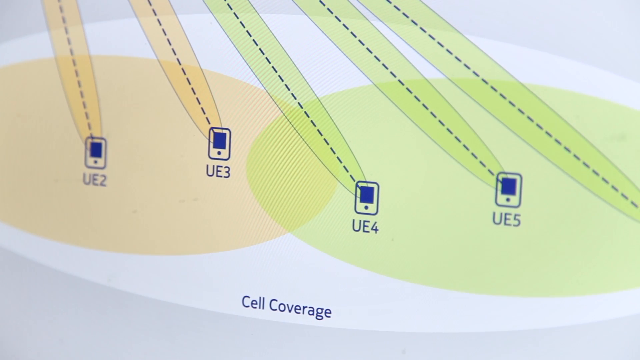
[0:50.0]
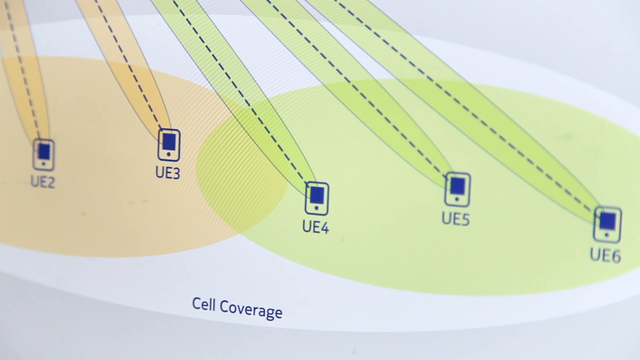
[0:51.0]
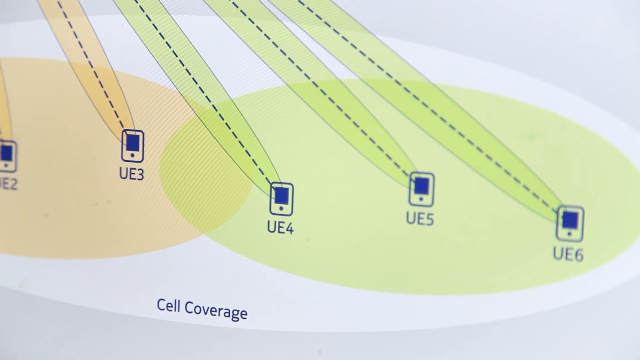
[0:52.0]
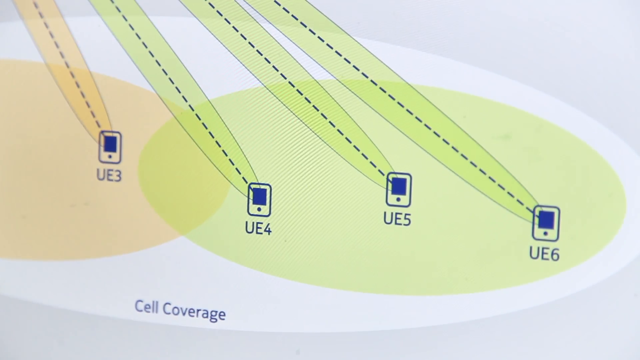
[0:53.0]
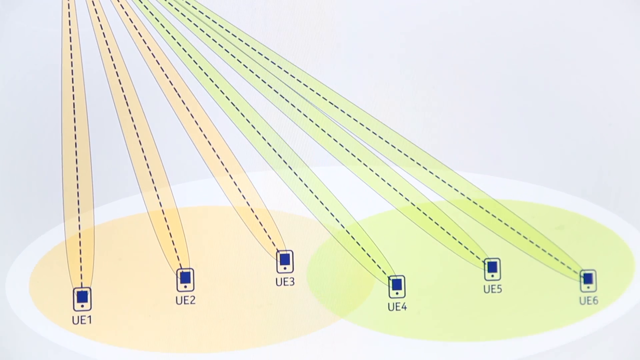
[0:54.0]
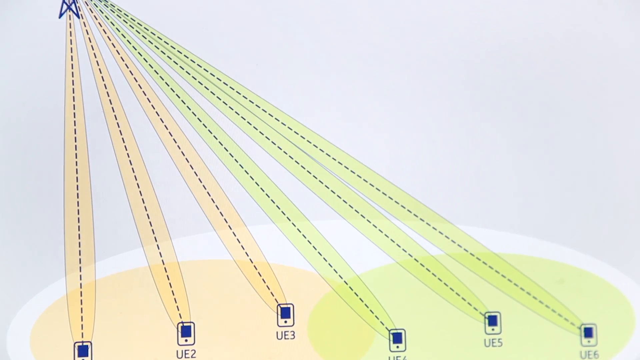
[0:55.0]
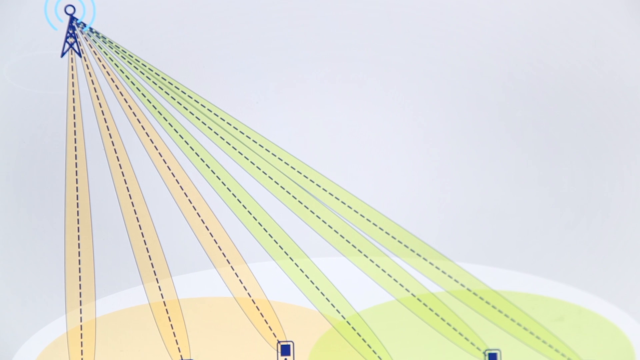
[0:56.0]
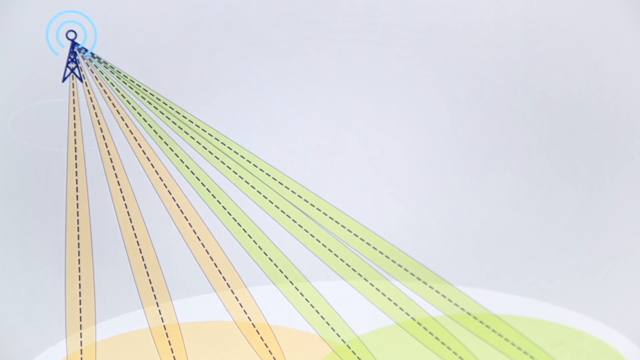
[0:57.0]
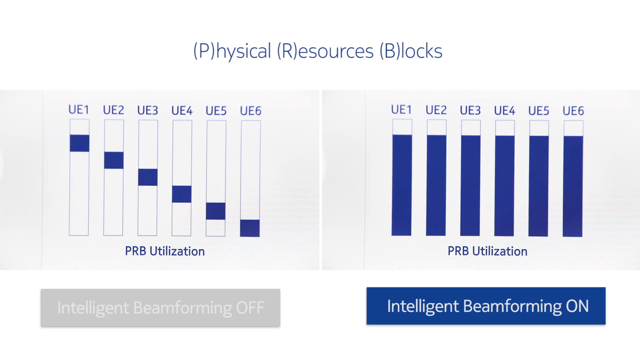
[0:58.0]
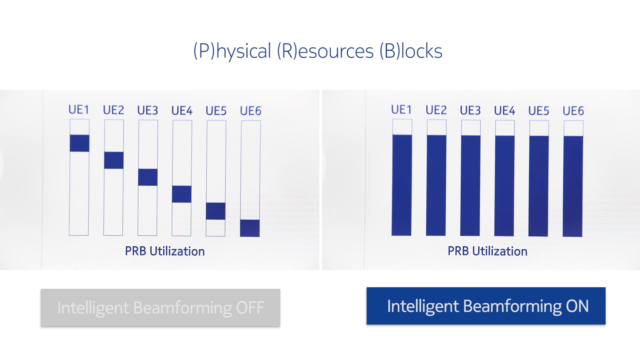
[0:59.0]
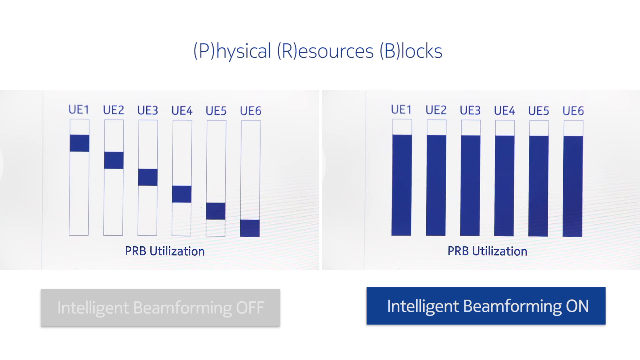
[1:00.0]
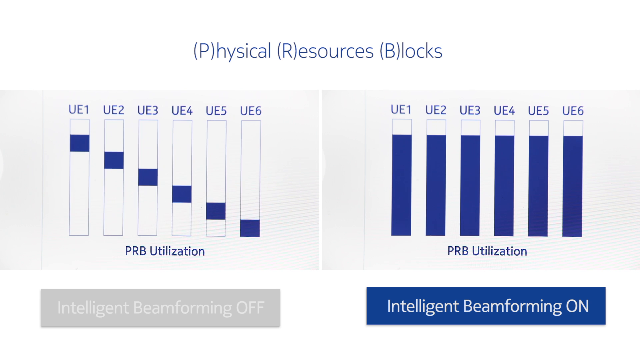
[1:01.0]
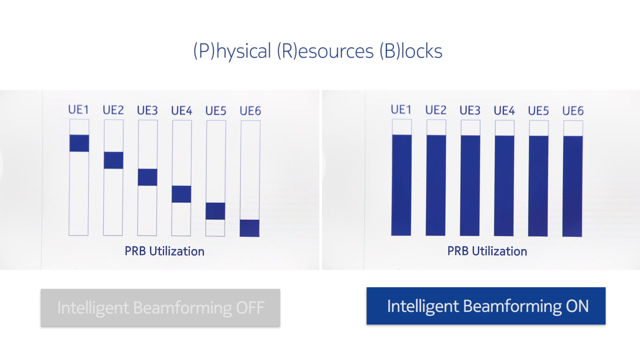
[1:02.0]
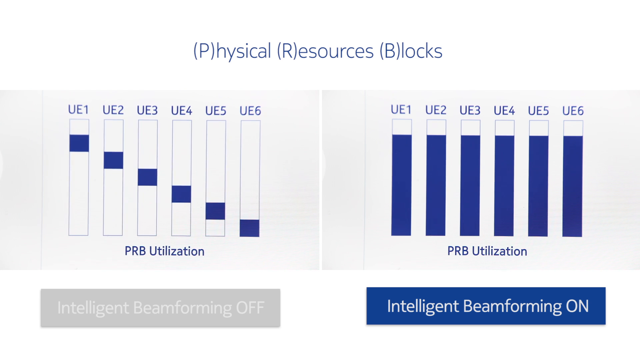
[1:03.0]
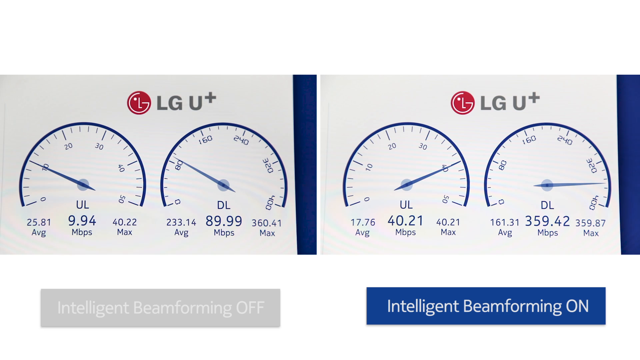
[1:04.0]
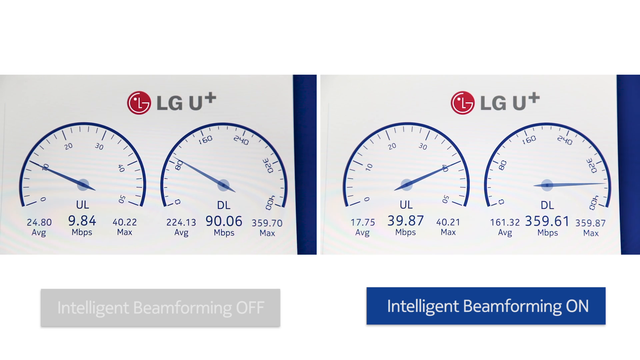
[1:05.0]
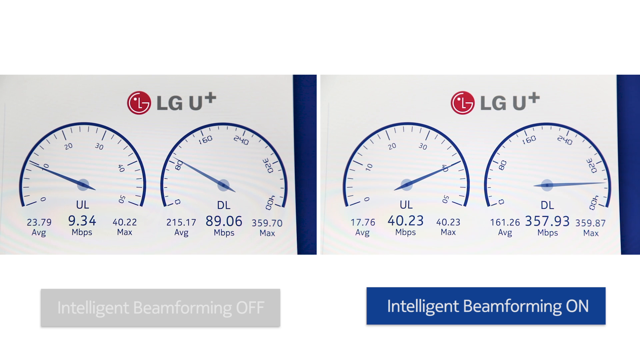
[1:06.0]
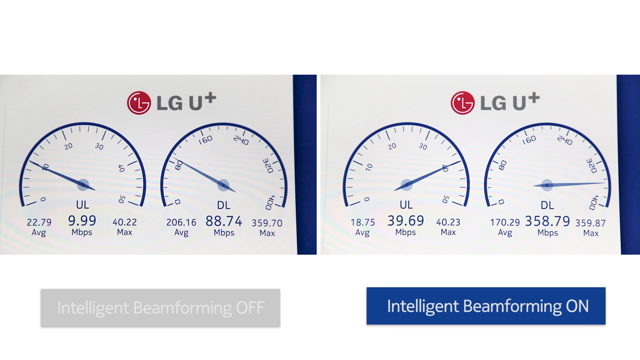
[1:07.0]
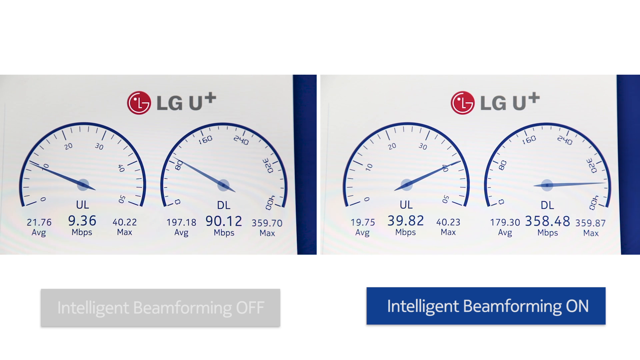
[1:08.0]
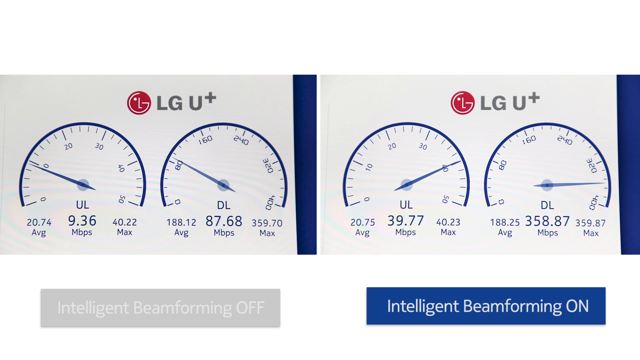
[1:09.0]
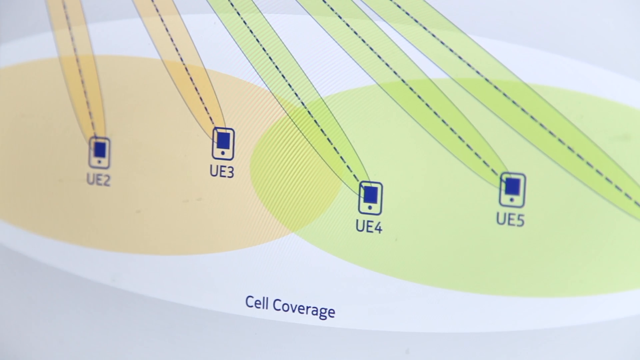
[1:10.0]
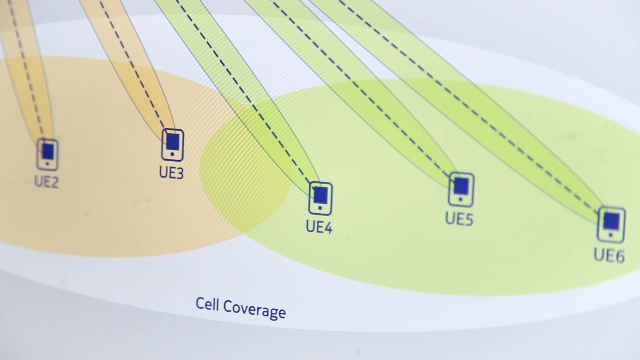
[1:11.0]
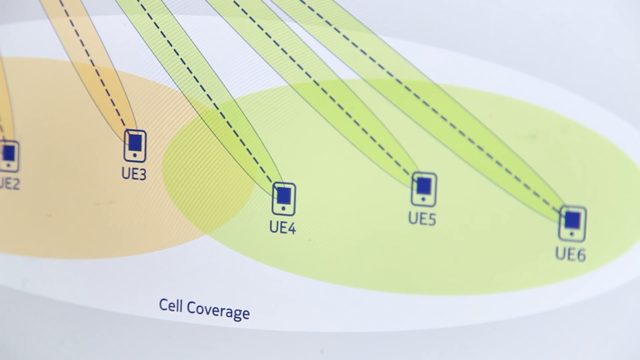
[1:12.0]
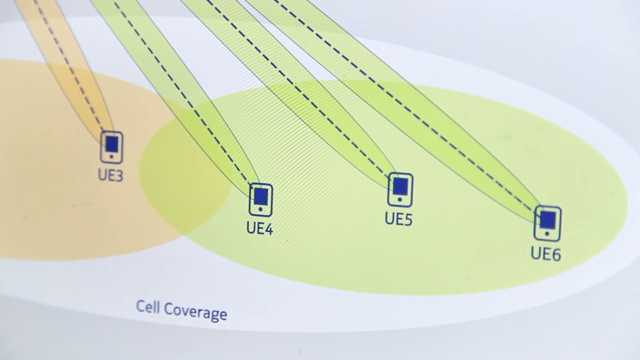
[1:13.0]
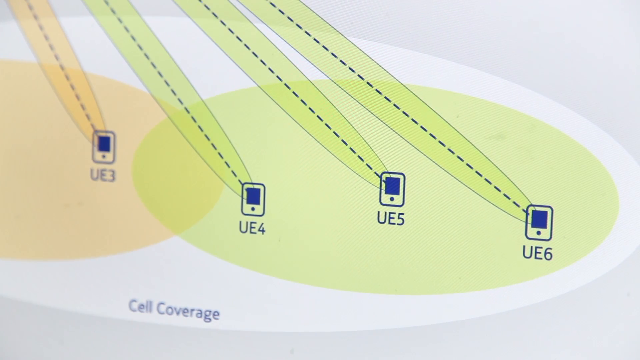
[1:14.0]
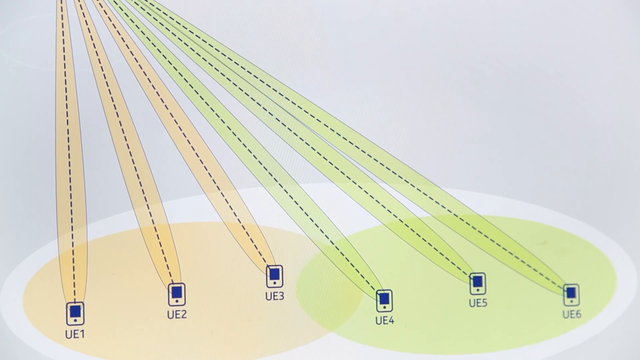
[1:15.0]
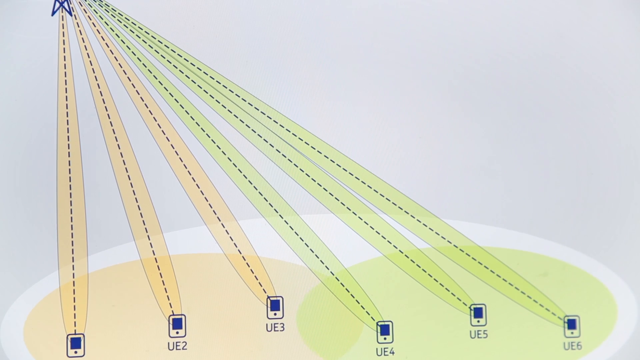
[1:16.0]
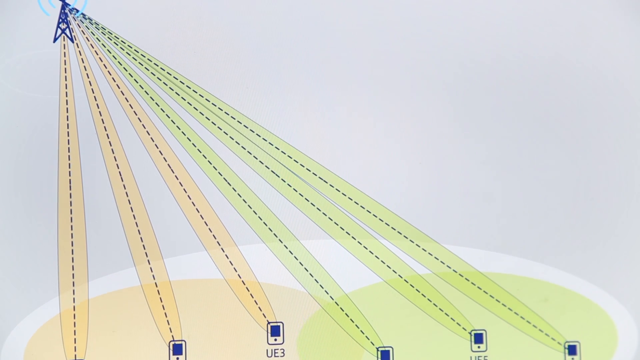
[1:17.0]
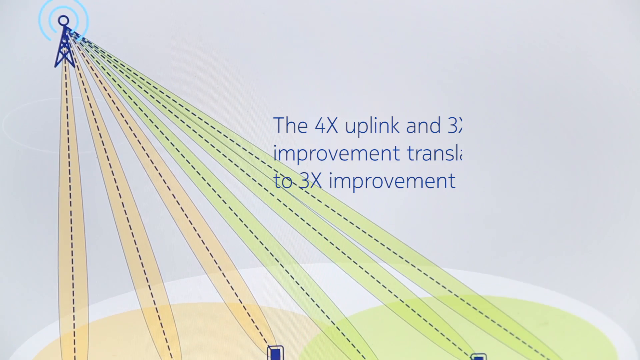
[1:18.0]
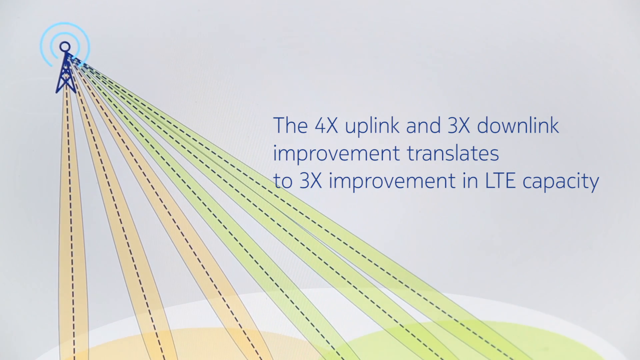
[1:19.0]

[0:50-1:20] Dotted lines come down from the satellite to different cell phones, representing the cell coverage. Three cell phones are placed all the way to the right in a light pink circle that takes up about half the screen, and overlapping it, taking up about the other half of the middle, is a light yellow circle with three cell phone images in it. The view moves up, following the dotted lines from the phones to the top of the satellite. The screen then changes to a graph with a long white rectangle across the top, in the middle of which blue lettering says "physical resource blocks", with parentheses around the p, the r and the b. Beneath are two graphs. The one on the right takes up half the screen and is labeled UE1 through UE6; under each UE is a long rectangular bar with only a little blue filled in, like a square of blue, and at the bottom it says "PRB Utilization". The graph on the left takes up the other half and has six bars, UE1 through UE6, filled with blue with just a little white left at the top; at its bottom it says "PRB Utilization". Underneath, a long blue rectangle says "Intelligent Beam Forming ON", with "Intelligent Beam Forming" in white and "ON" in capital letters. The screen then shows two separate graphs, each with two speedometers, and at the top of each is the little red LG insignia next to "LG U+".